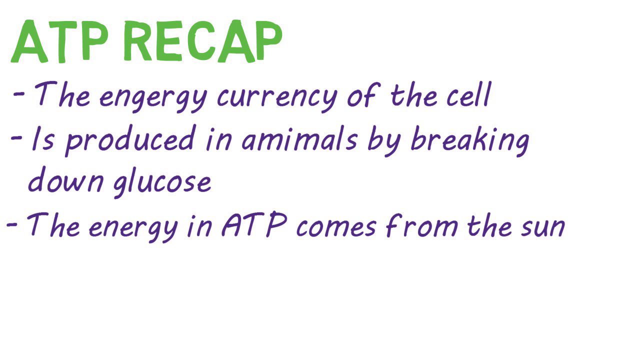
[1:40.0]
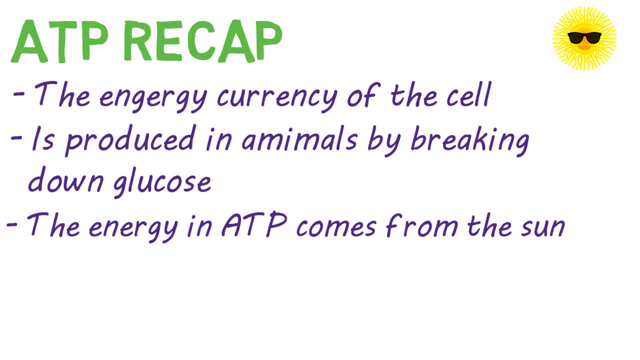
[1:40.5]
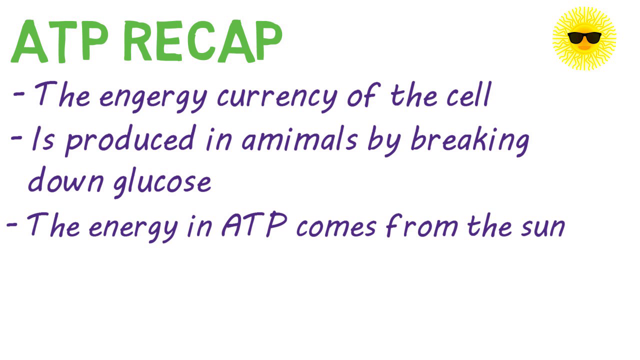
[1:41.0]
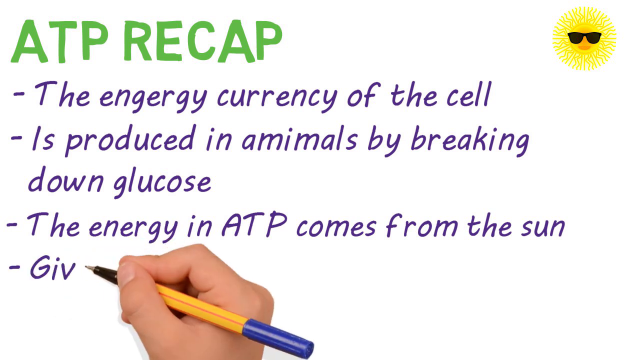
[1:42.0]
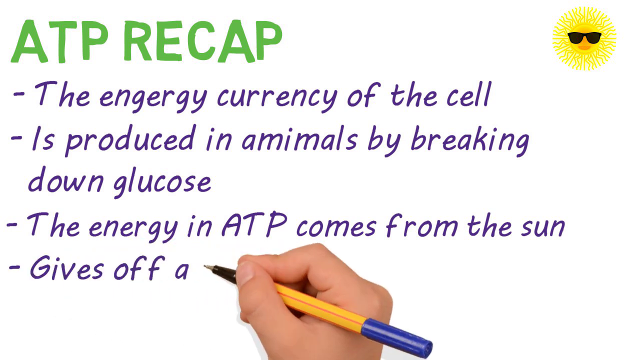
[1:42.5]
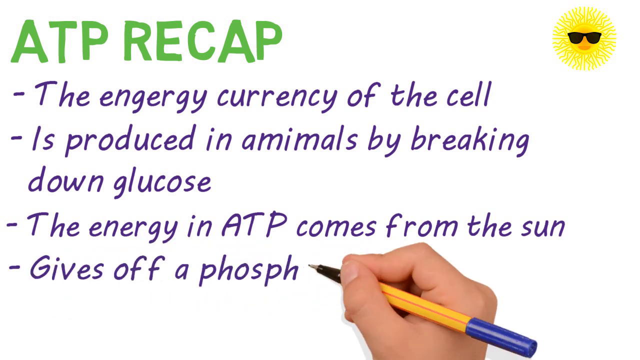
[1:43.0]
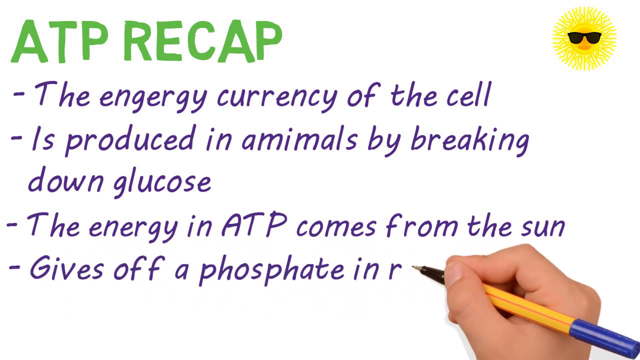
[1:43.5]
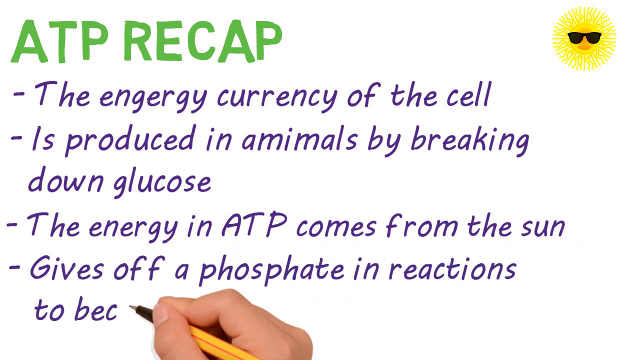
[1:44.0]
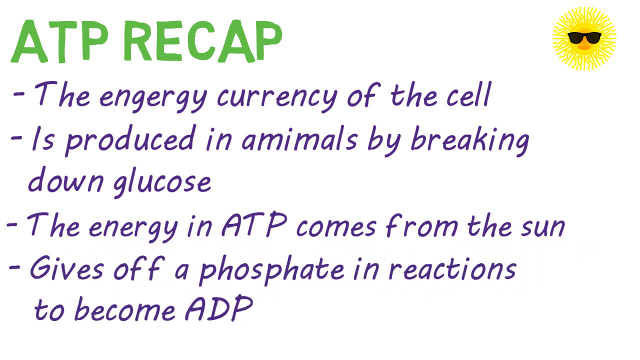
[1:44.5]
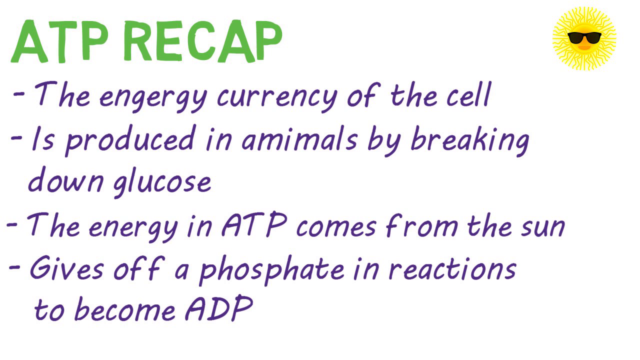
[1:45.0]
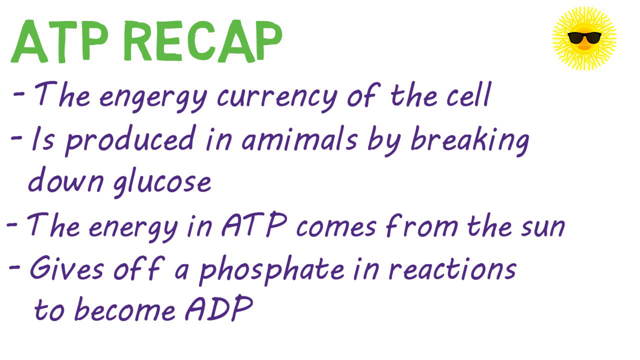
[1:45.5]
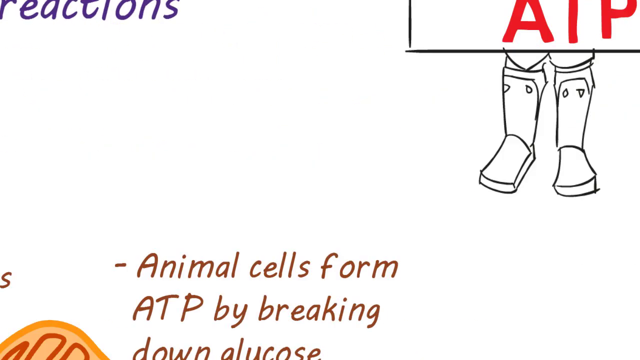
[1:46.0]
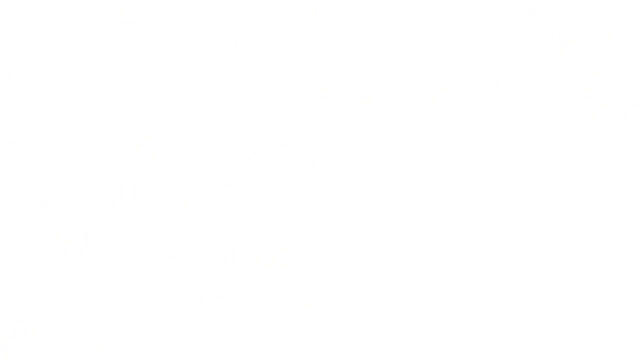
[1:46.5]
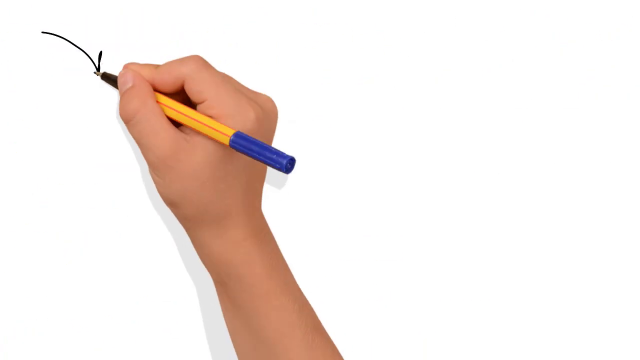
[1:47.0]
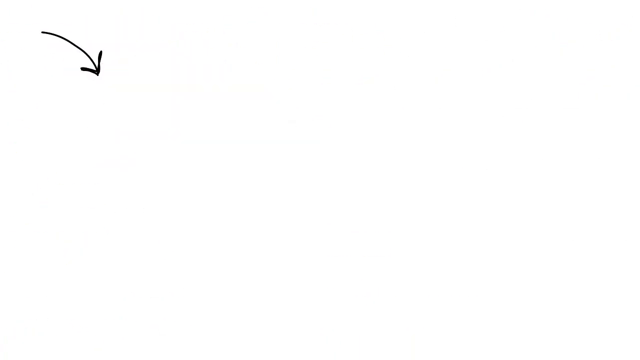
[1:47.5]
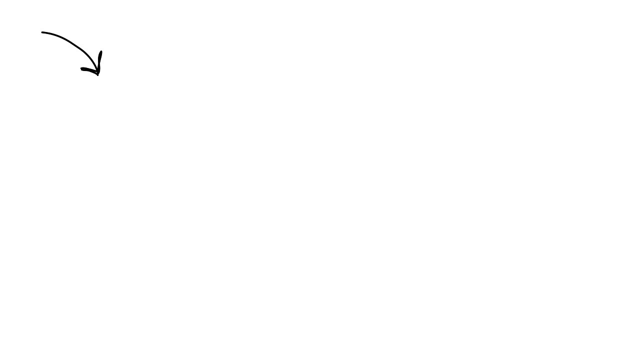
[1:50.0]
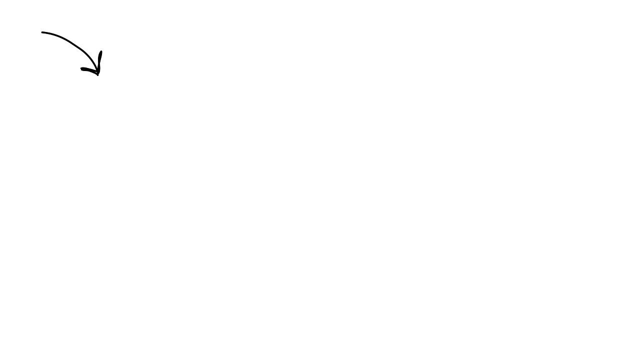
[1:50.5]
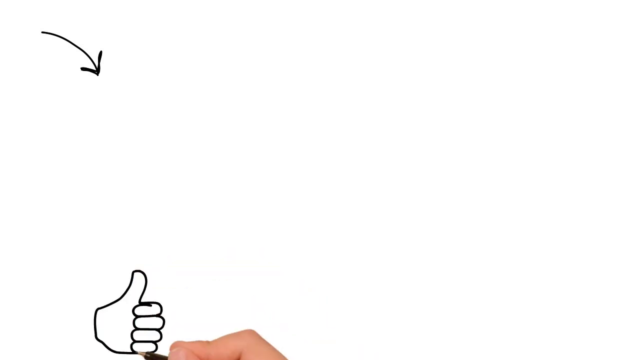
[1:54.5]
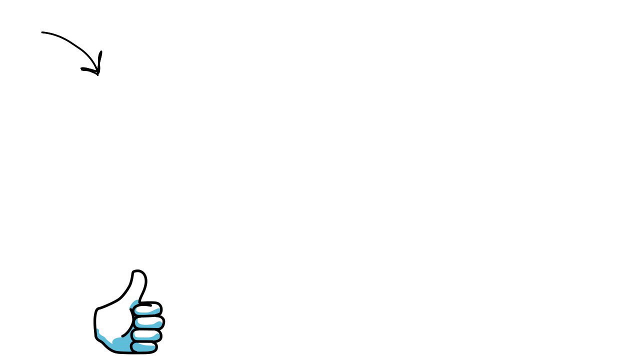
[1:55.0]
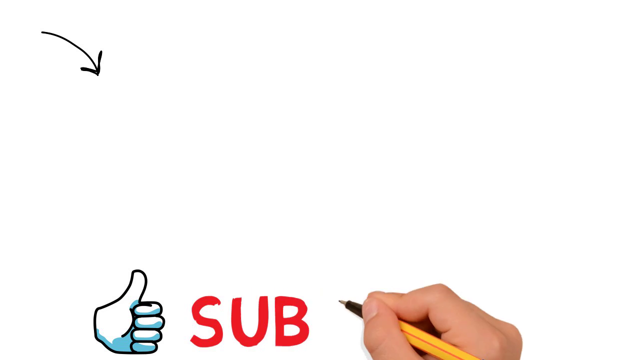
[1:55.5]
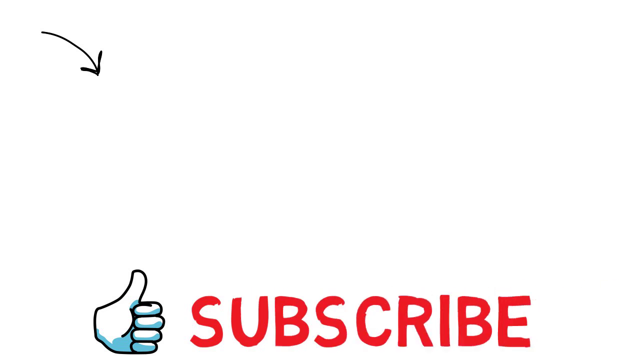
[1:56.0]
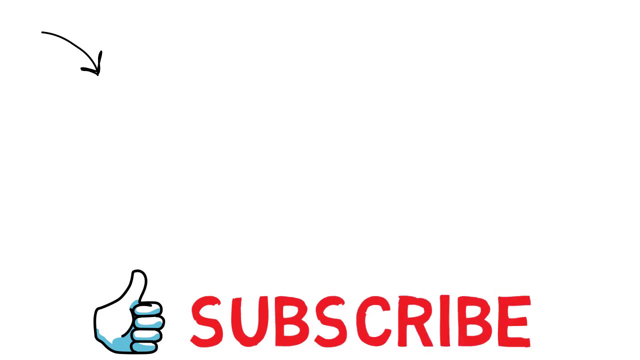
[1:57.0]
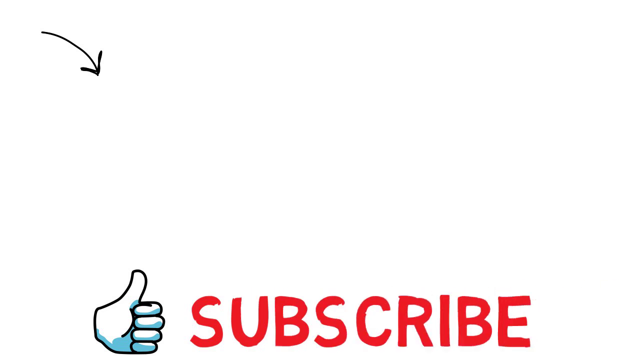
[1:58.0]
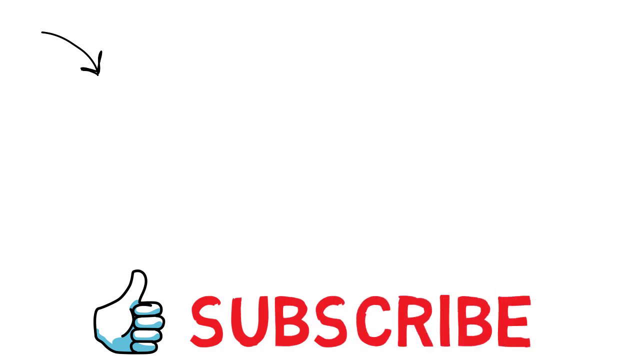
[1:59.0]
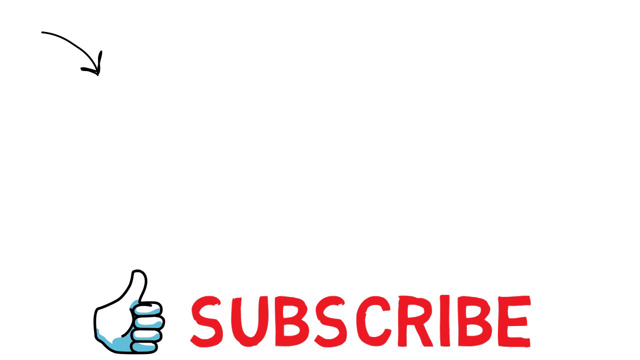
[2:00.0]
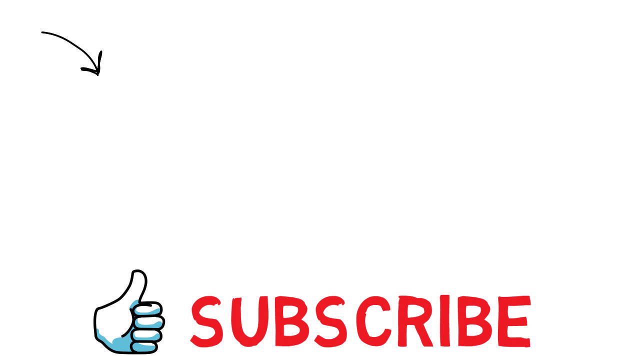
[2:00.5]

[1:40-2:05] The screen says "ATP recap," with three bullet points running from top to bottom that read "the energy currency of the cell," "is produced in animals by breaking down glucose," and "the energy in ATP comes from the sun." An image of a sun wearing sunglasses appears in the upper right corner. The hand then writes more words from left to right across the screen: "gives off a phosphate in reactions to become ADP." Next, the hand draws a black line with an arrow on its end, coming from the upper left of the screen and pointing down to the center left. The hand then draws a thumbs up in the lower part of the screen with the word "subscribe" next to it.